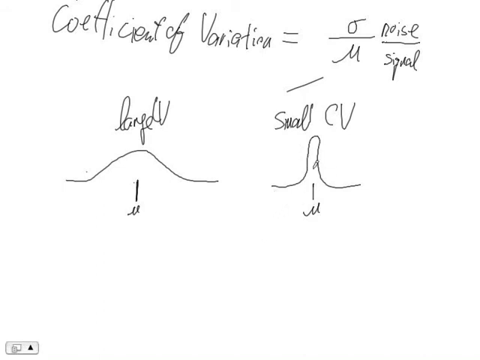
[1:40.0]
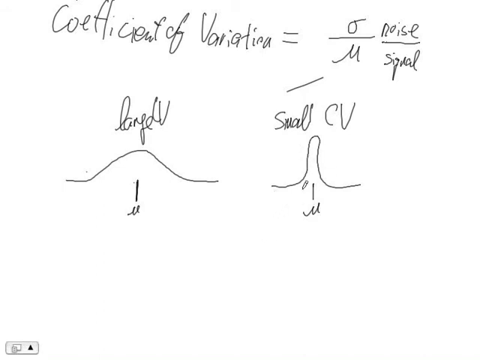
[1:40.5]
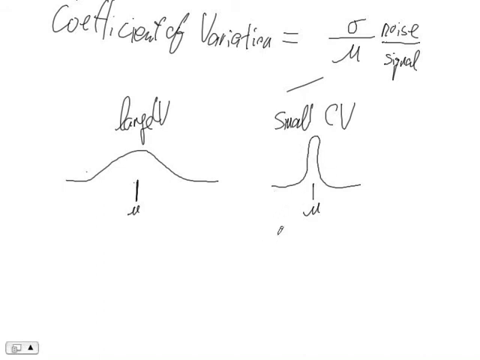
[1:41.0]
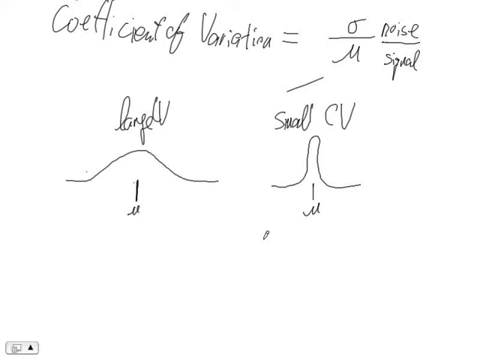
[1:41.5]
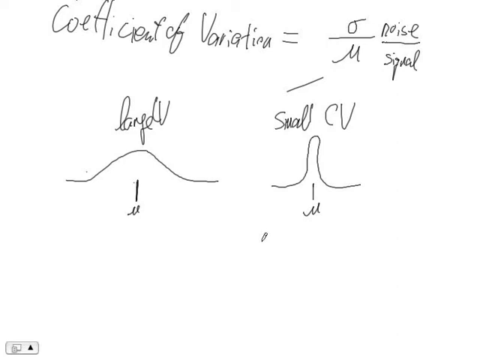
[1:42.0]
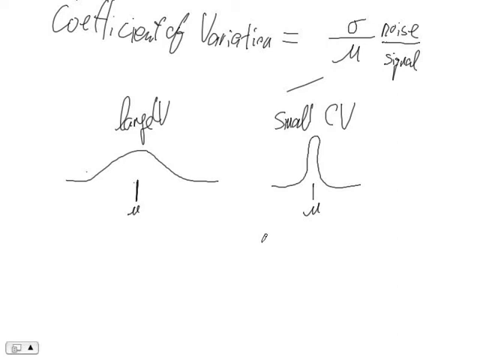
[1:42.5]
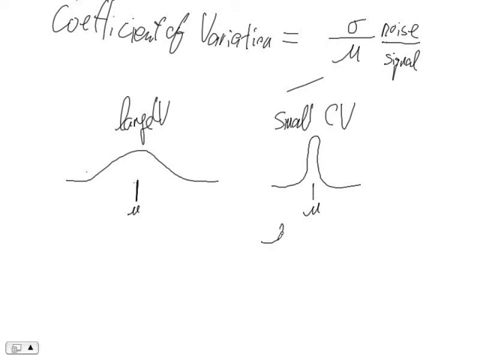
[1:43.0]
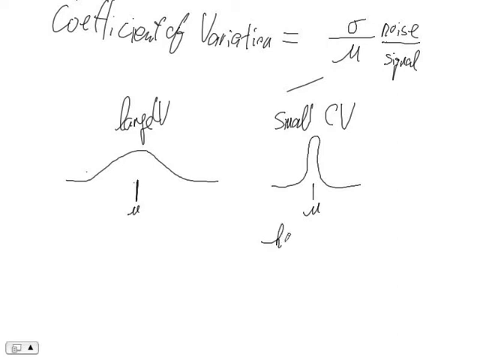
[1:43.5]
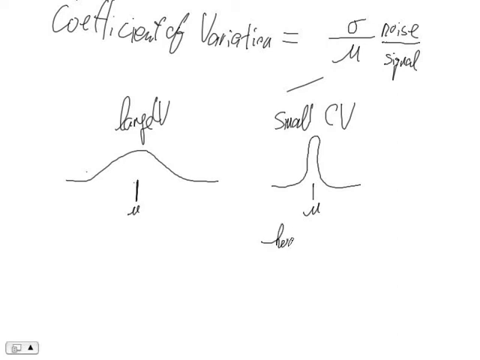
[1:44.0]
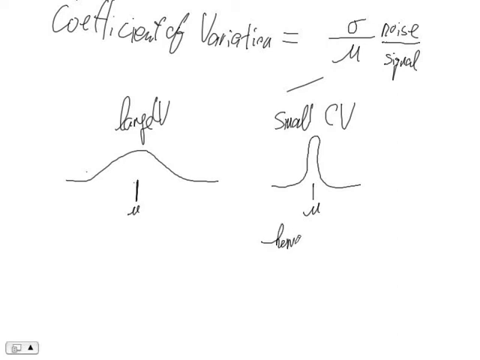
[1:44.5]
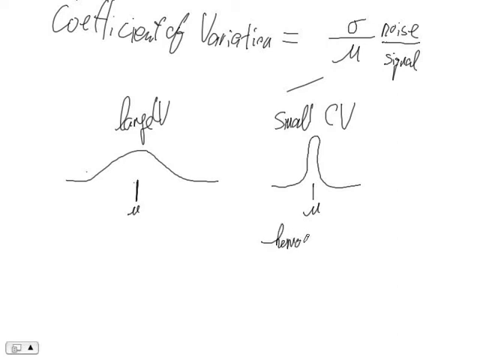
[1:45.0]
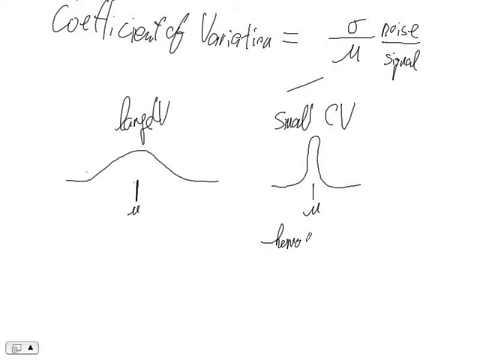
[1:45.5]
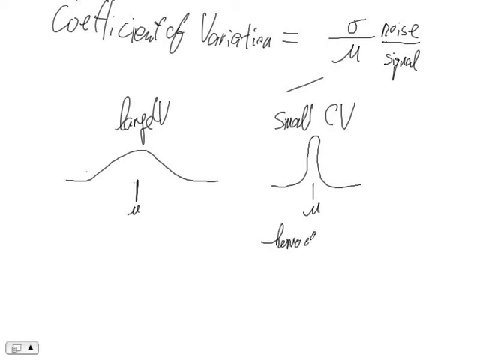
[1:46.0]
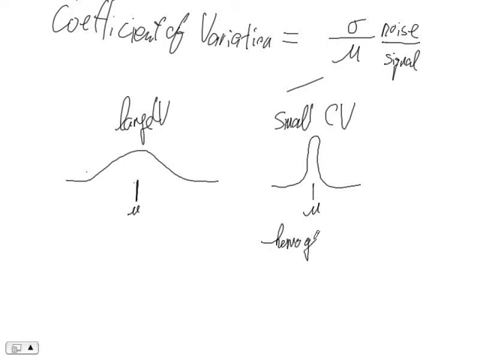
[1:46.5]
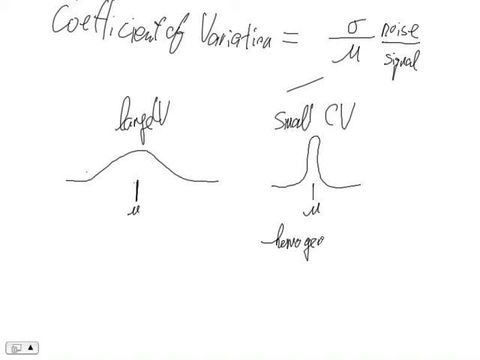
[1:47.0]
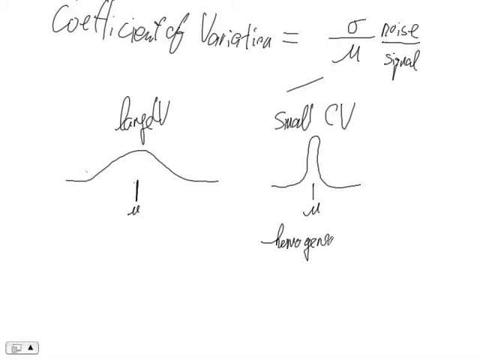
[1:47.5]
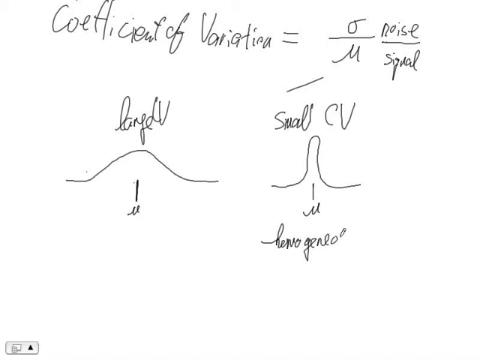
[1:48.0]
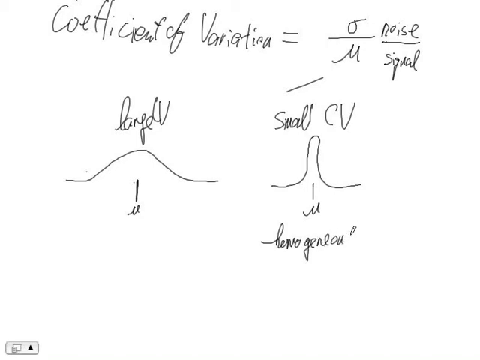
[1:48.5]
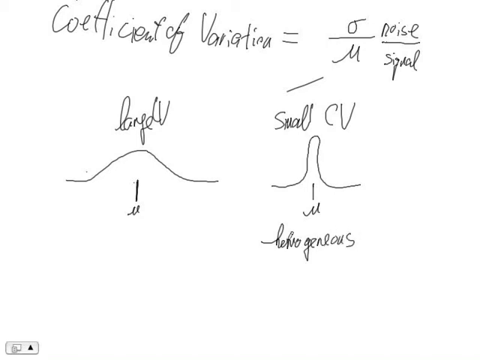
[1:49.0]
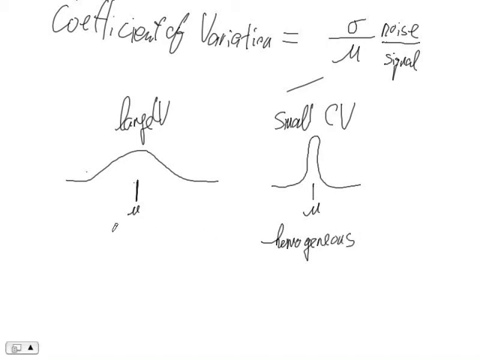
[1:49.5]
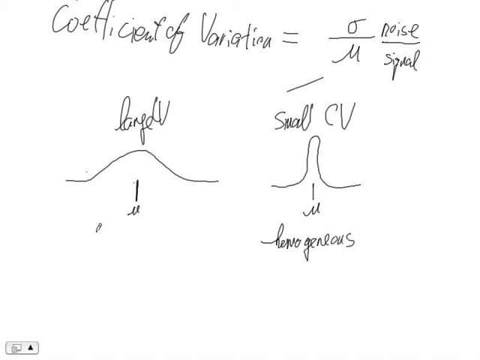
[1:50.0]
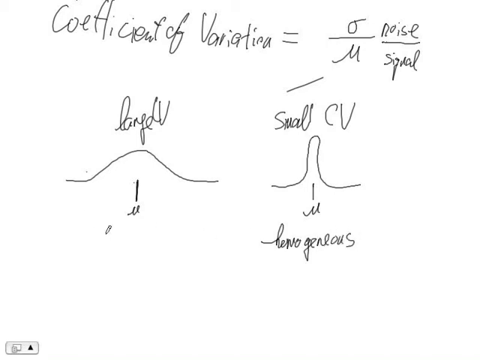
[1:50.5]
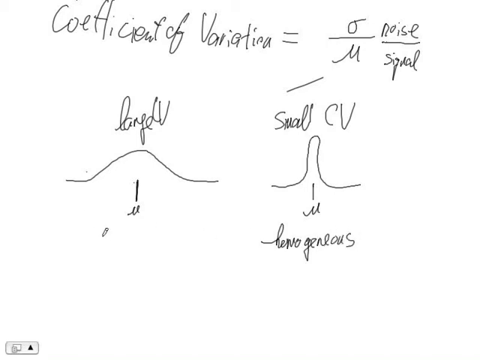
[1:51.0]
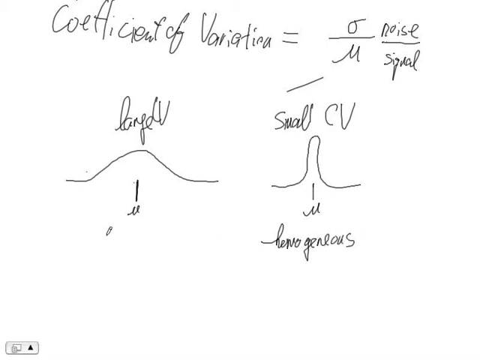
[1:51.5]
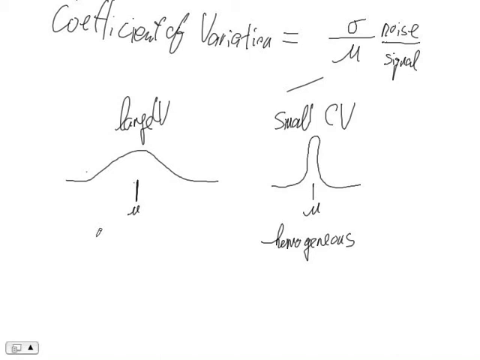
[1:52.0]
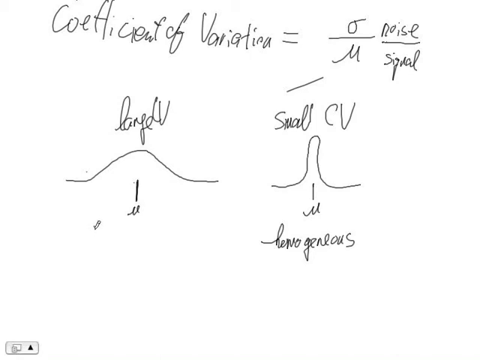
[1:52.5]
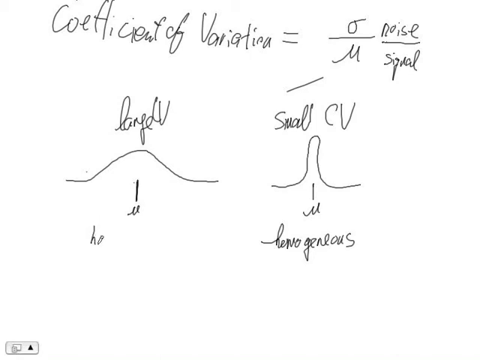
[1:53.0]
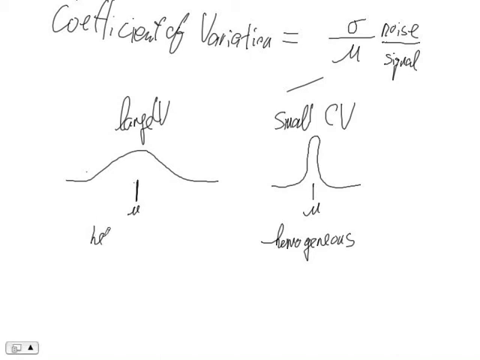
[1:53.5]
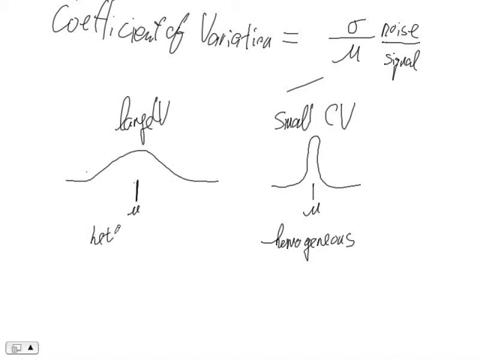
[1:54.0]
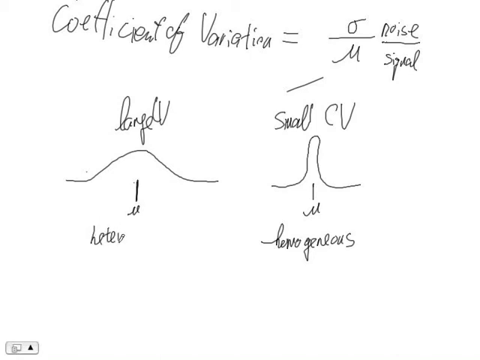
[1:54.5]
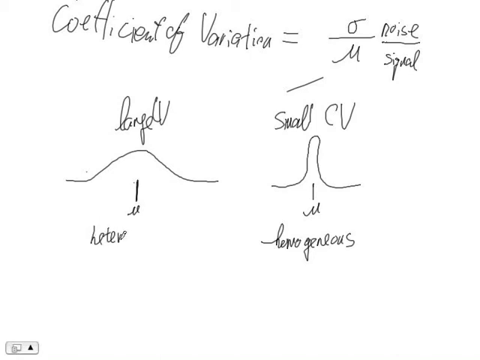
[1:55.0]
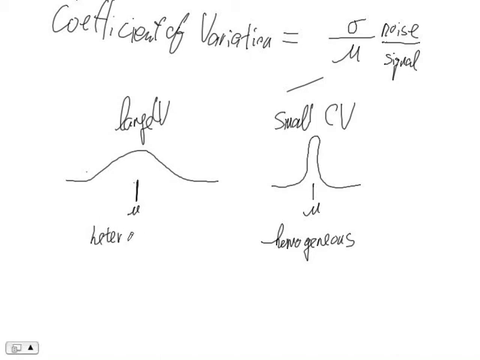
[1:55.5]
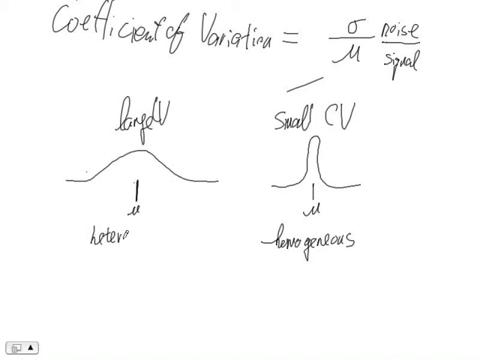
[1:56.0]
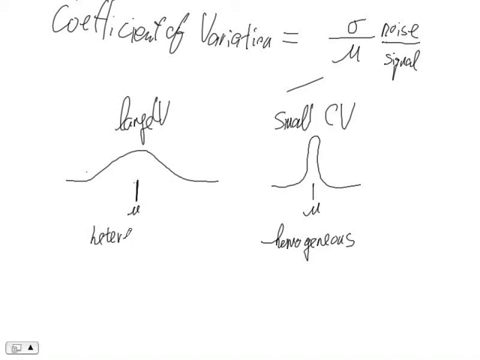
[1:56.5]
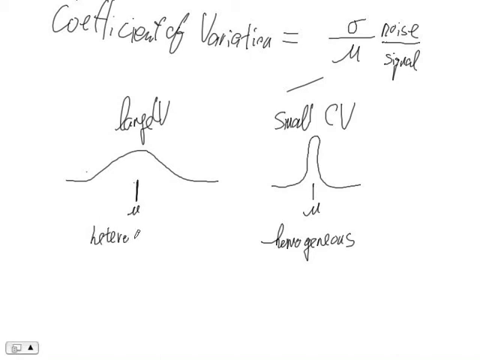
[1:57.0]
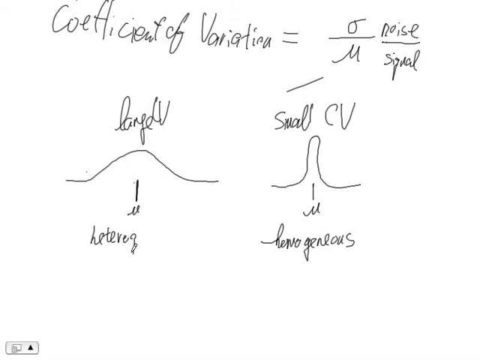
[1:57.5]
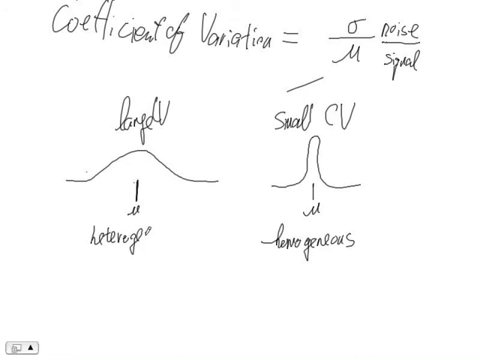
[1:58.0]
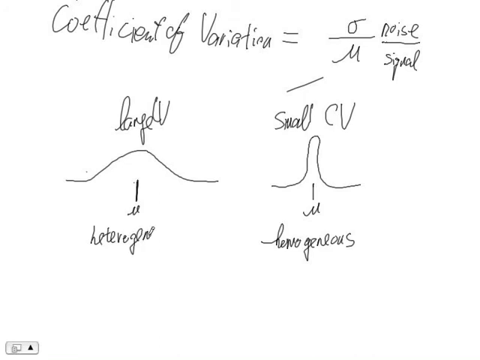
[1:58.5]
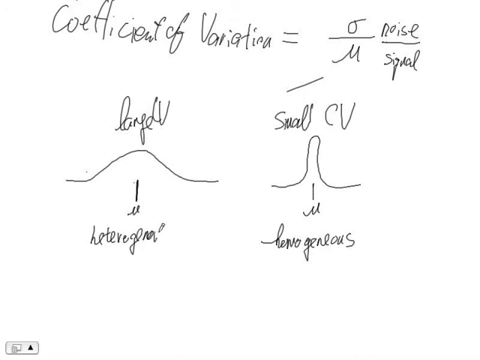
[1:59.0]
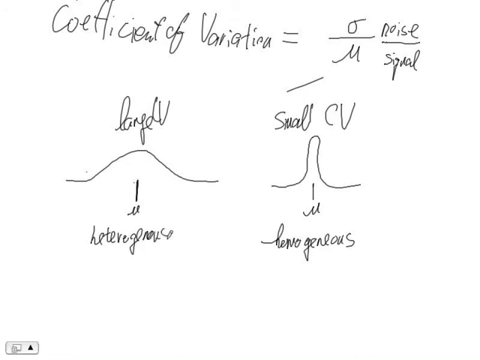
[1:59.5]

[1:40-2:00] The two diagrams are shown, with the pencil writing labels beside them; the large V is labelled heterogeneous, and the small CV with another, unclear word. The pencil demonstrates the difference between the two diagrams.